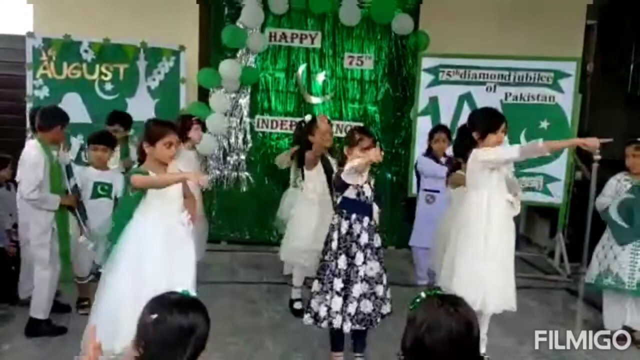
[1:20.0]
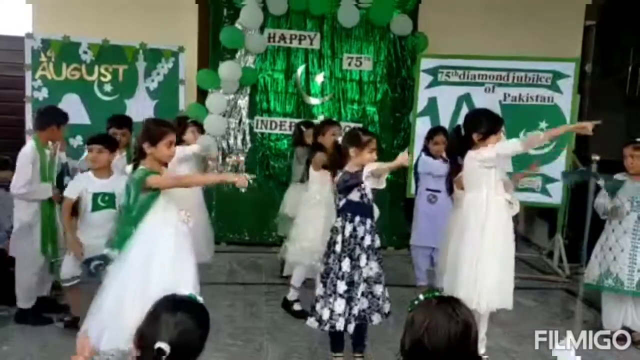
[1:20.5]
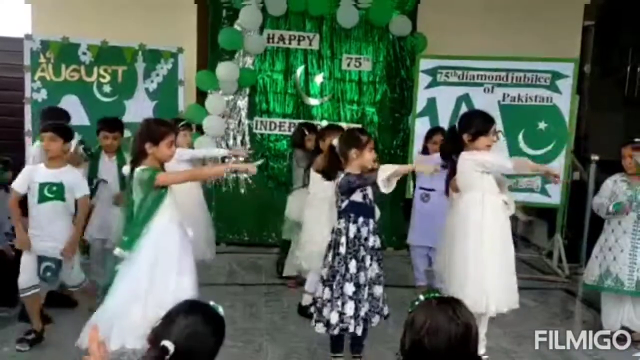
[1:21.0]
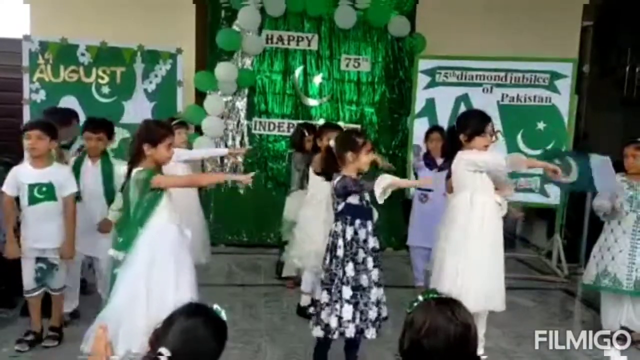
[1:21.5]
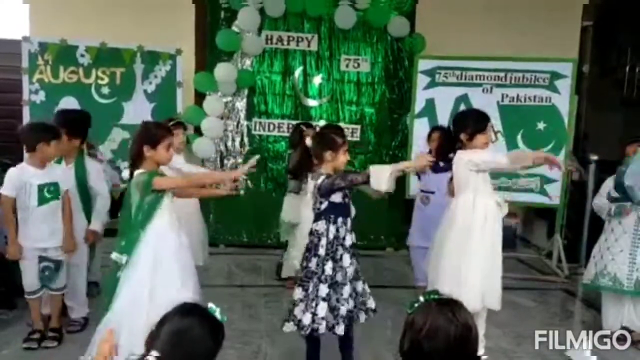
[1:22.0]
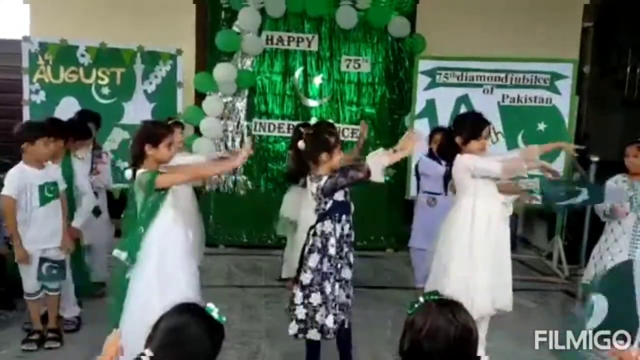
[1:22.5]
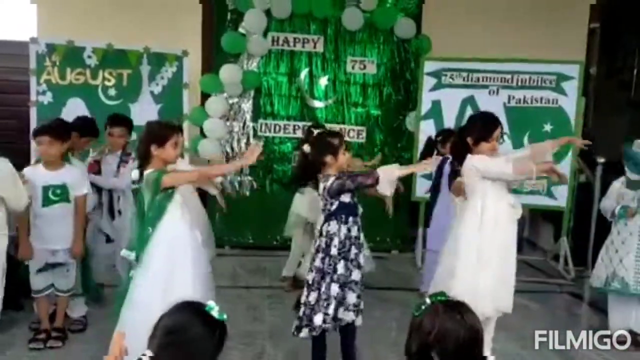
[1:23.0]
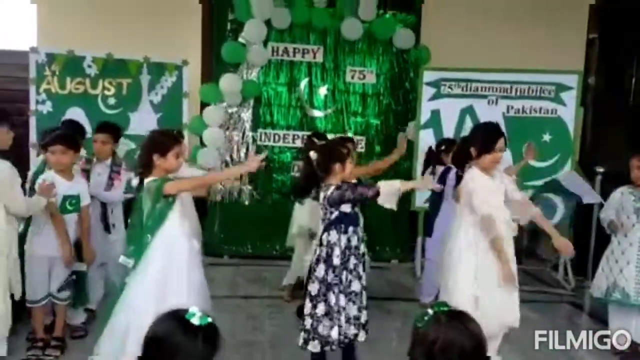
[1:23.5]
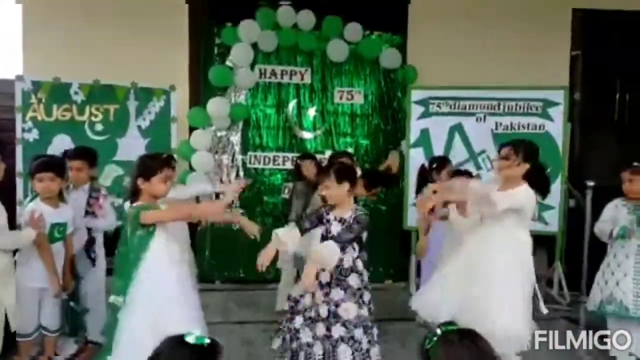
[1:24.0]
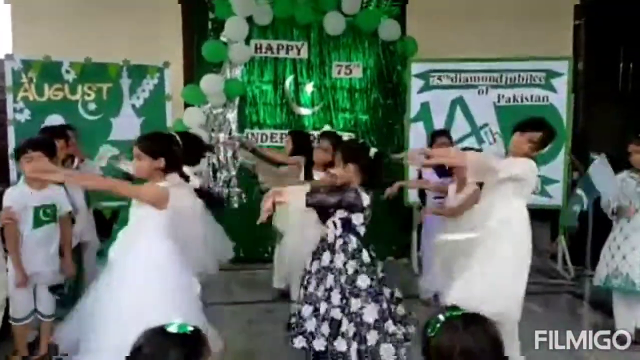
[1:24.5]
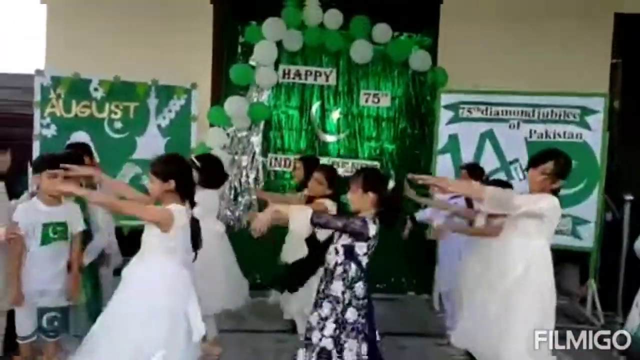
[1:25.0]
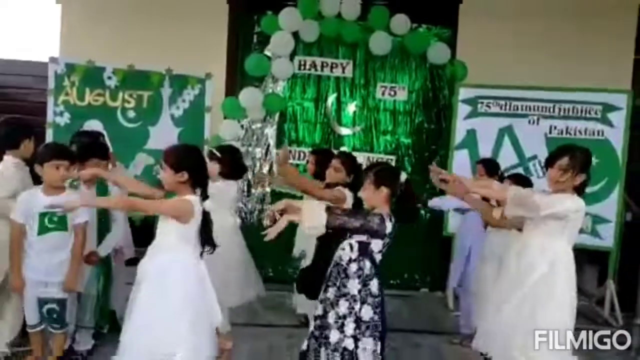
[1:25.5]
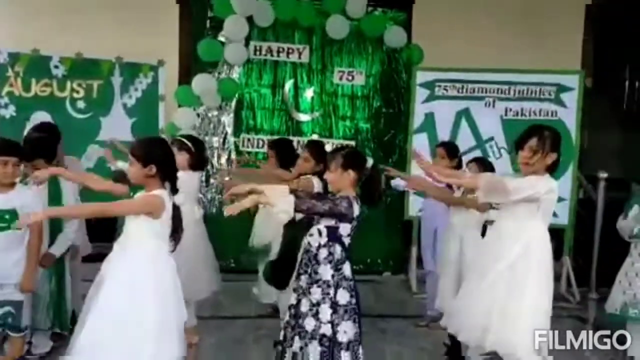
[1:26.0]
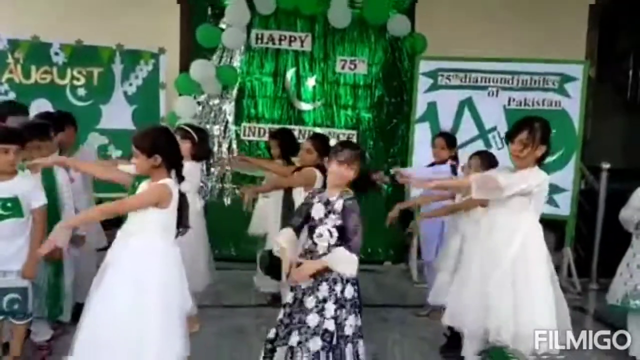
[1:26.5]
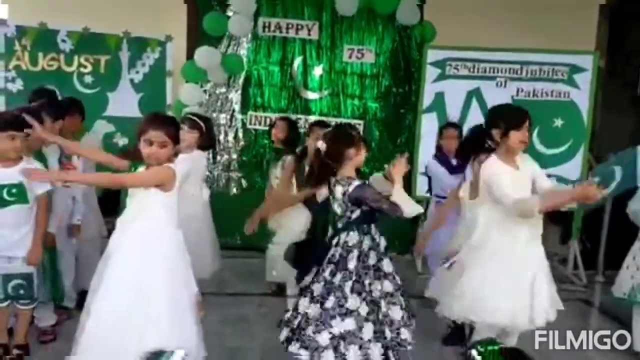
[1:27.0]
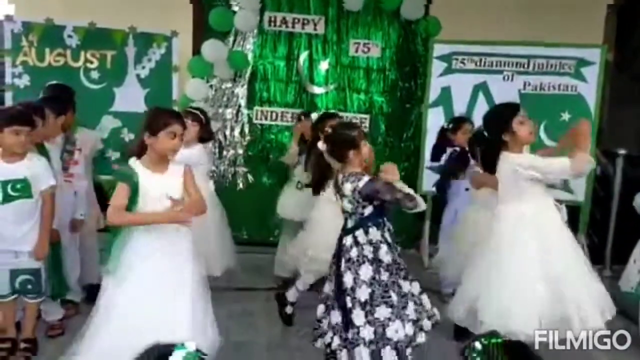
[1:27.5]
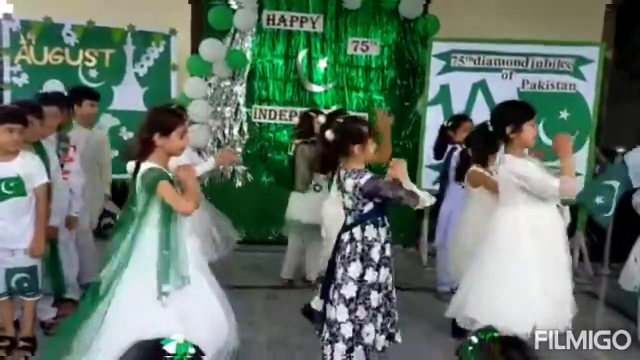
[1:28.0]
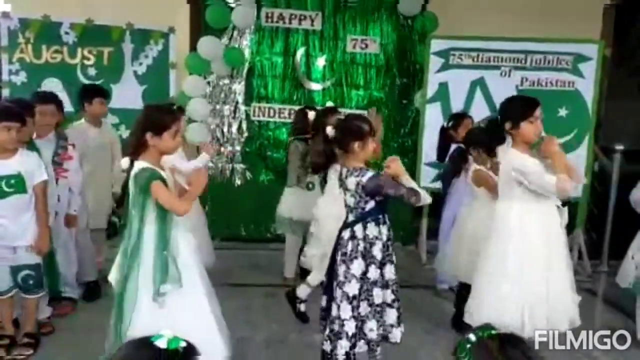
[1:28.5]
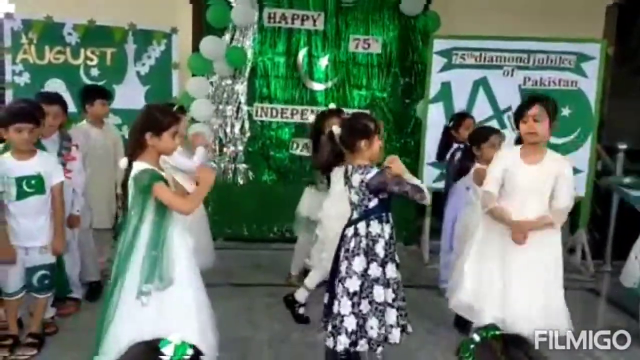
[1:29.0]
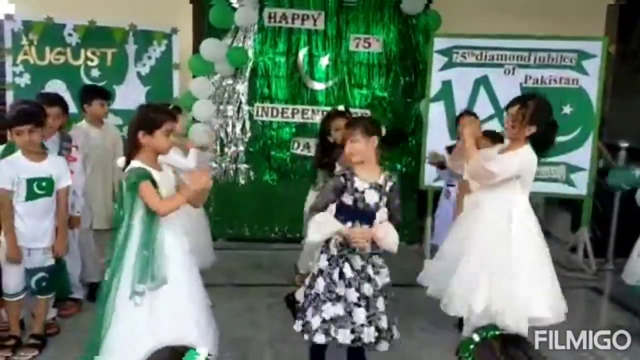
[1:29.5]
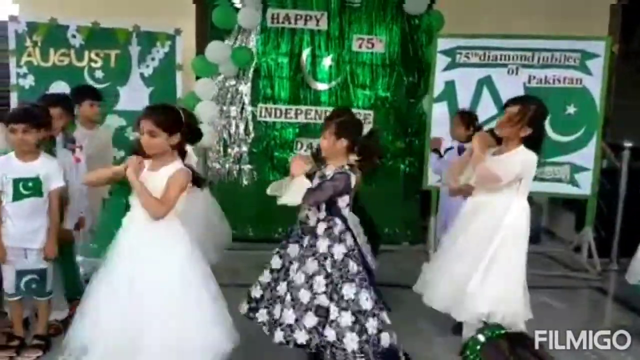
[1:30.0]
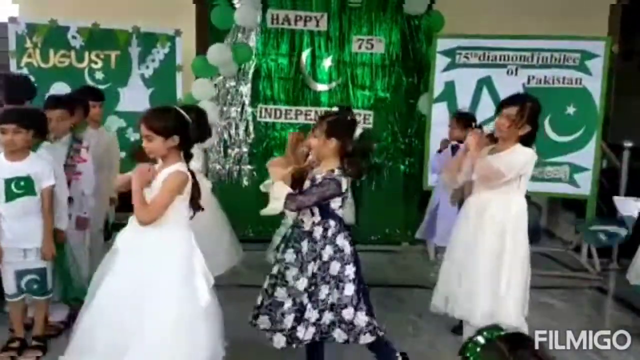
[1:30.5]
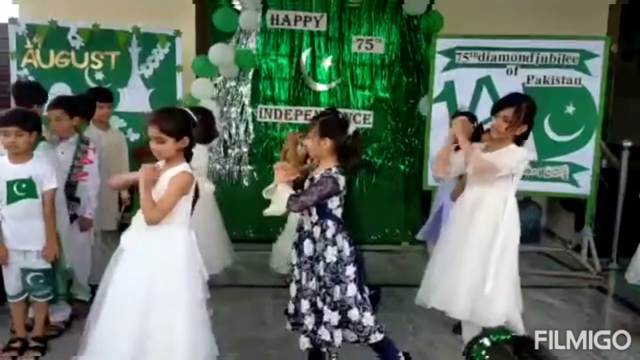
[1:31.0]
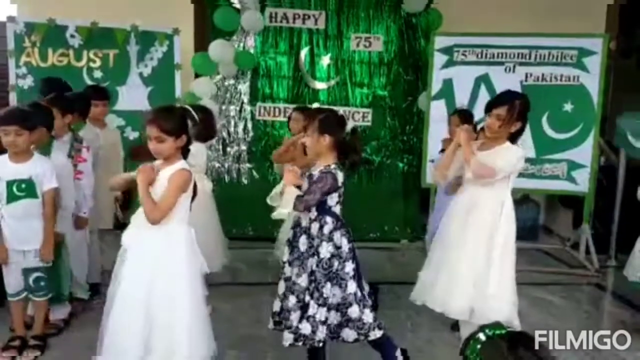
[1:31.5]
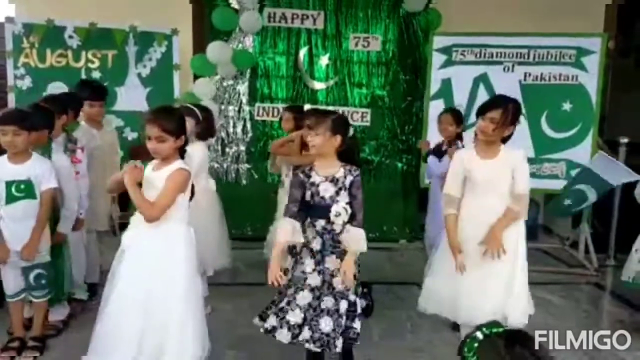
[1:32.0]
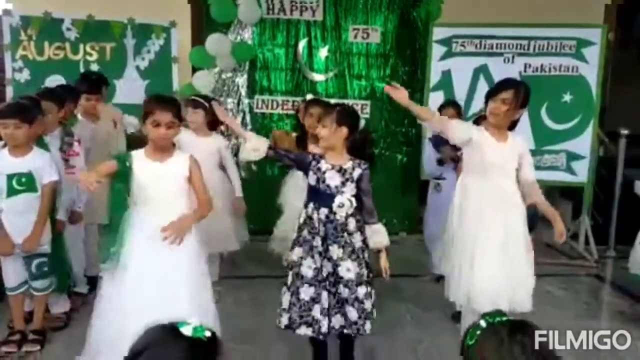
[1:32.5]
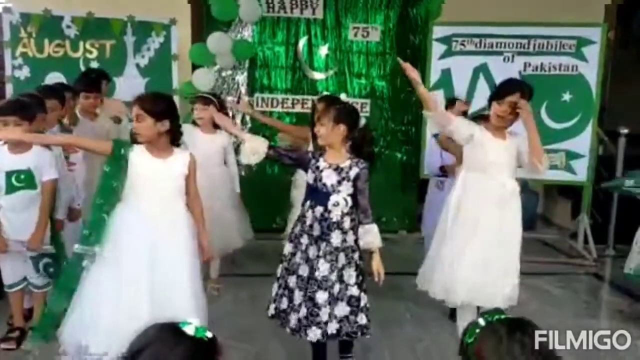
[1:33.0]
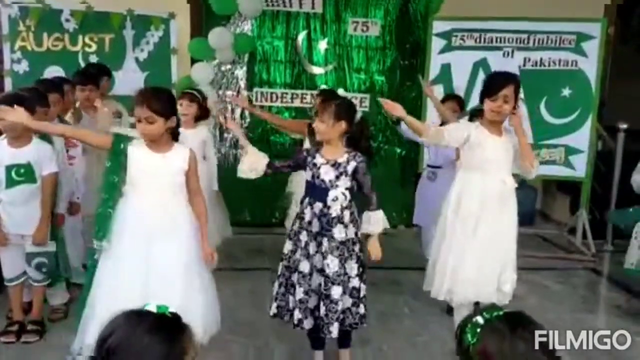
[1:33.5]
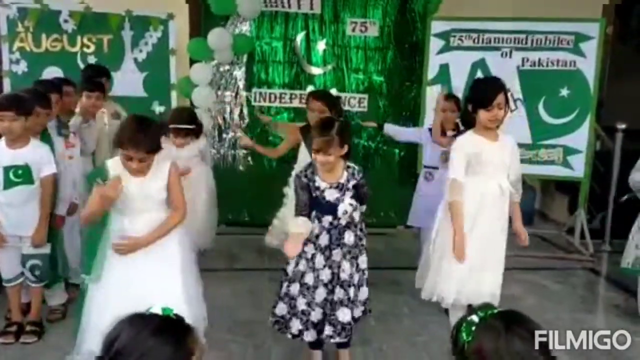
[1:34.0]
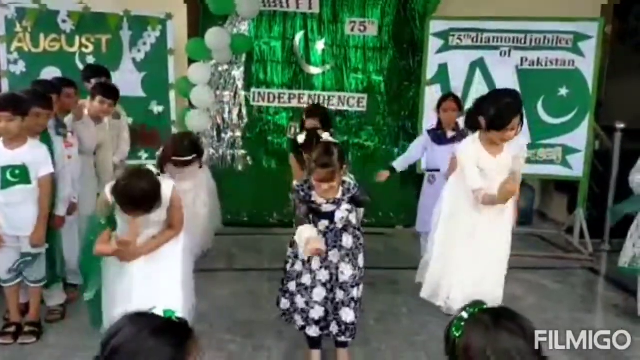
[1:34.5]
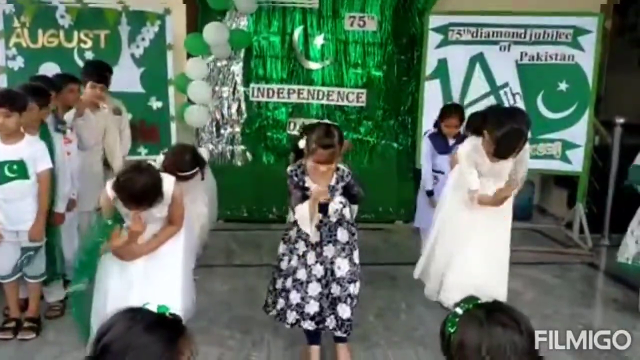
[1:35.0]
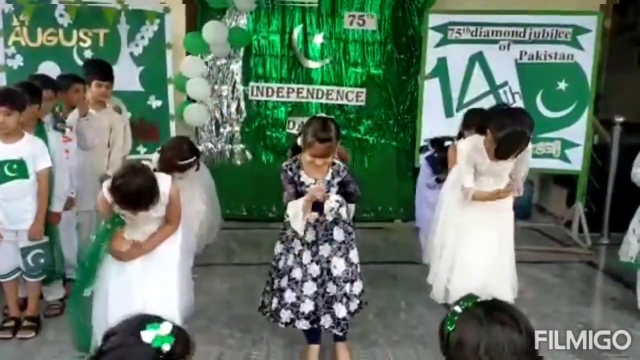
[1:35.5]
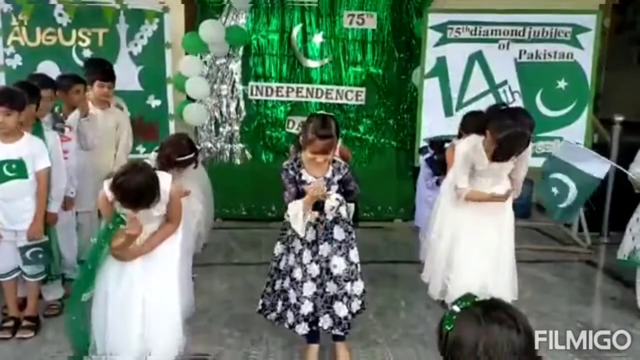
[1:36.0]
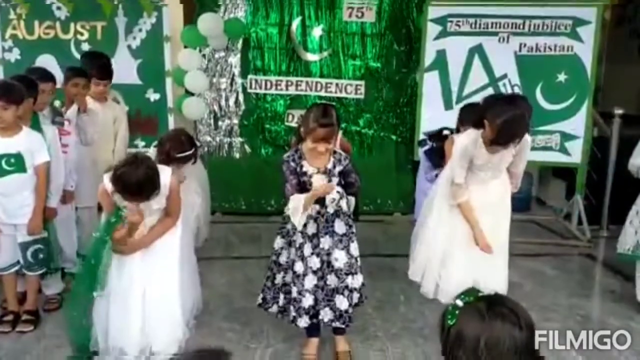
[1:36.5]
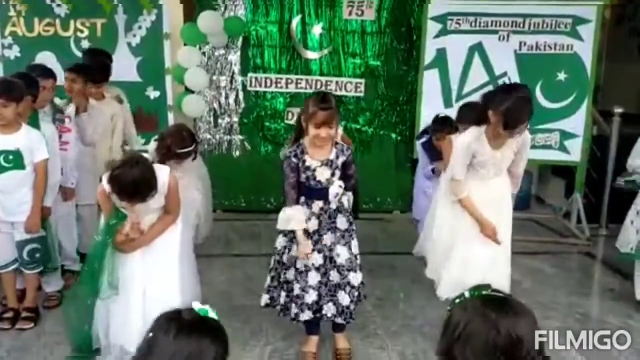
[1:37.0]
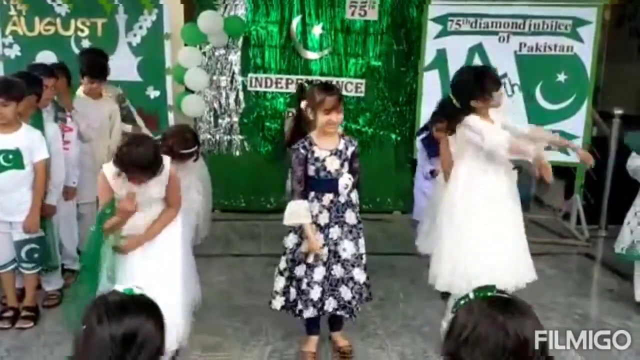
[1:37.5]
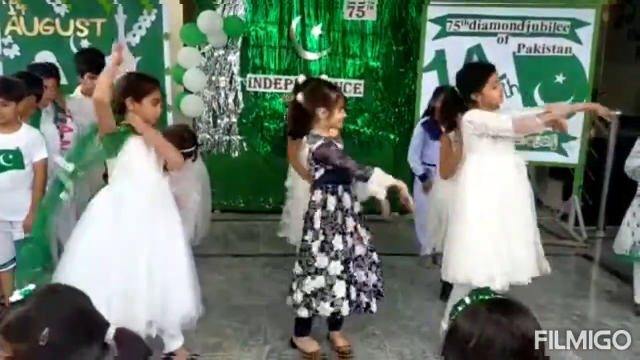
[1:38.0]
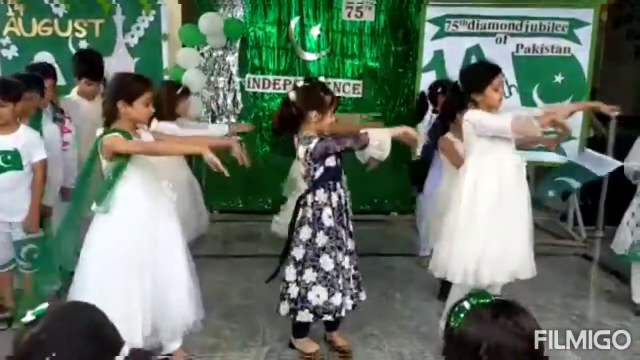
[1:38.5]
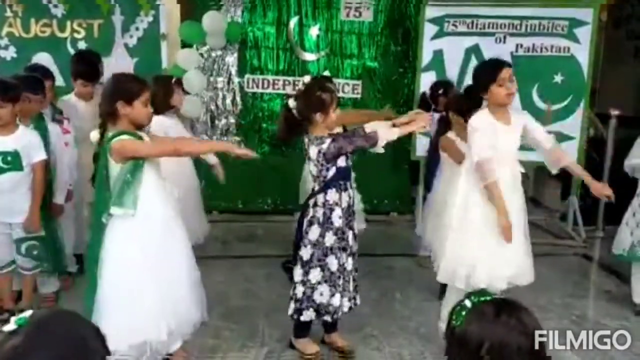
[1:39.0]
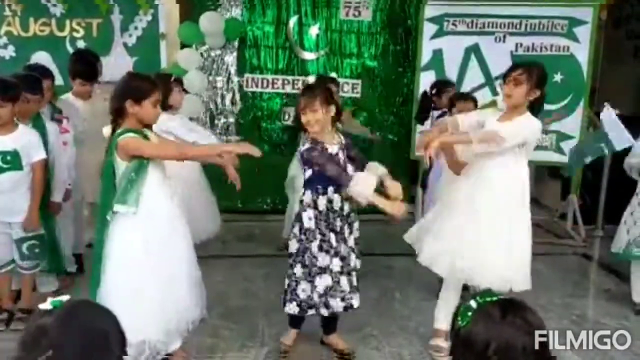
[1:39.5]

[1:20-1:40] The girls appear to be back in the middle of the room, moving back and forth and dancing somewhat coordinatedly; there seem to be about 12 girls. The boys from the row of boys are kind of hanging around to the left of the group of dancing girls. The backs of the heads of the seated kids watching are visible in kind of the middle area of the crowd. One other girl not part of the dancing group, in a green and white dress, is the girl who was waving the flag earlier. In the middle of the dancing group's front row, a girl wears a black and white dress with a flower pattern. The girls immediately to her left and right wear cream-colored dresses, and the one on the left has a single green sash draped on her shoulder.